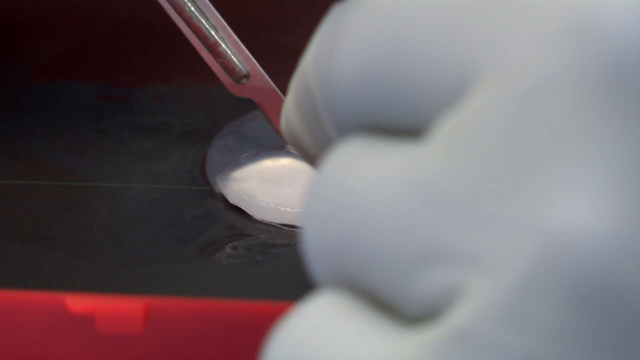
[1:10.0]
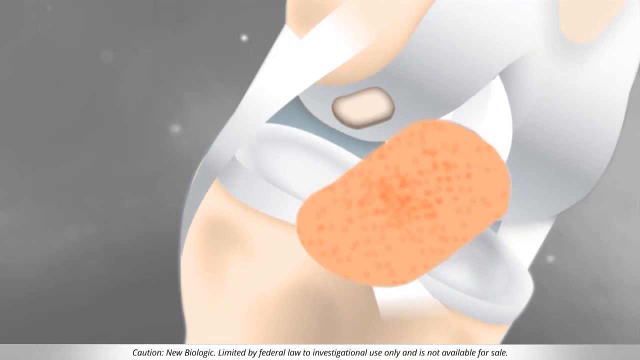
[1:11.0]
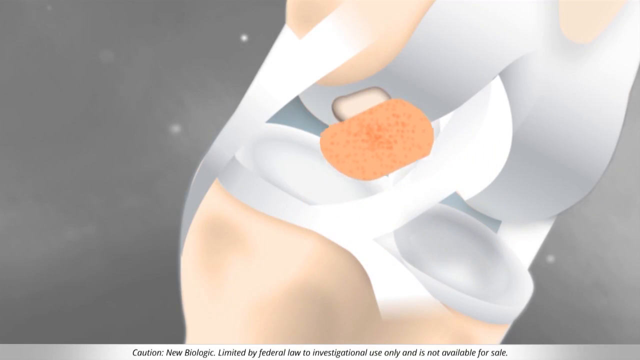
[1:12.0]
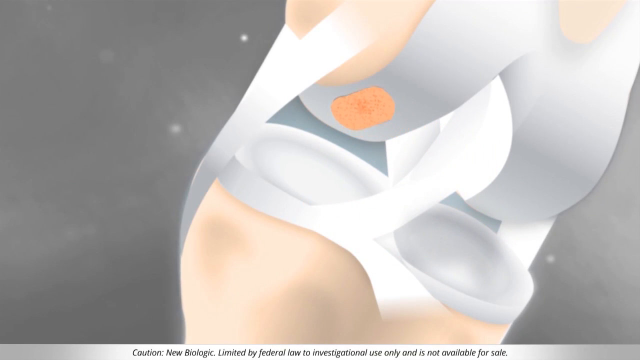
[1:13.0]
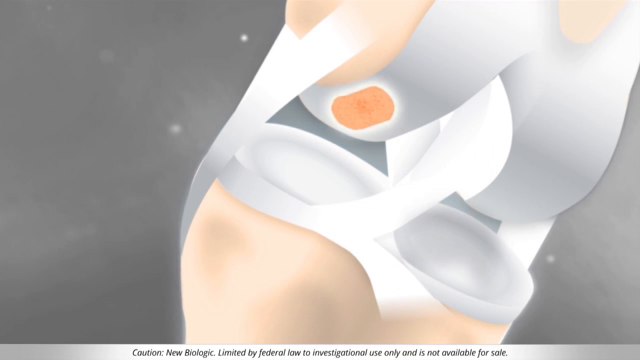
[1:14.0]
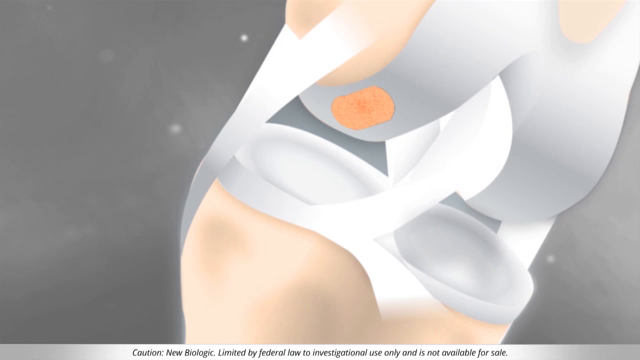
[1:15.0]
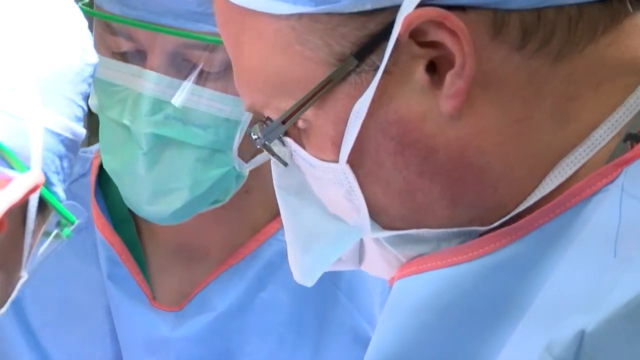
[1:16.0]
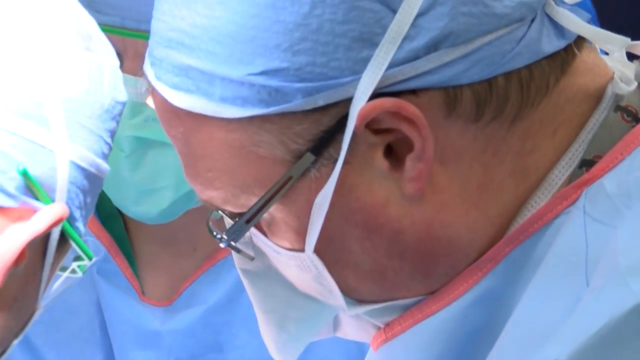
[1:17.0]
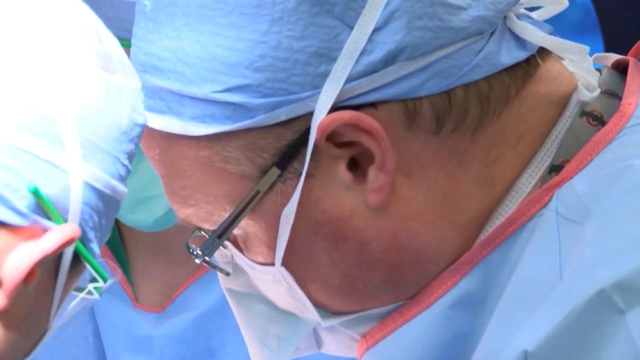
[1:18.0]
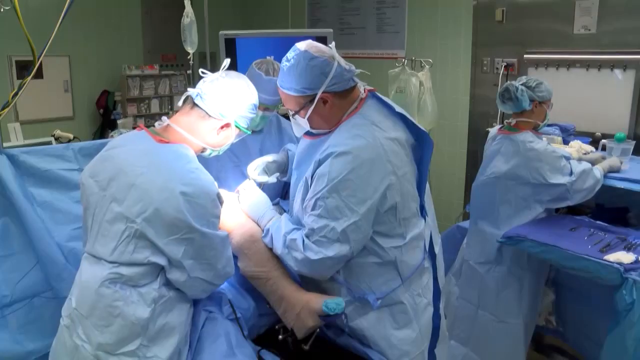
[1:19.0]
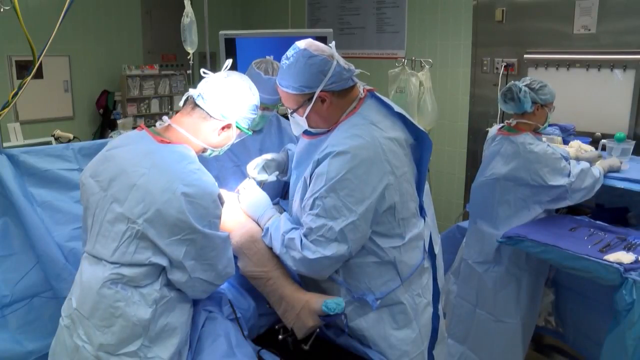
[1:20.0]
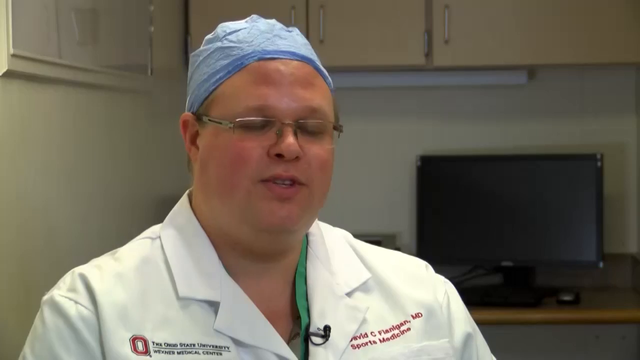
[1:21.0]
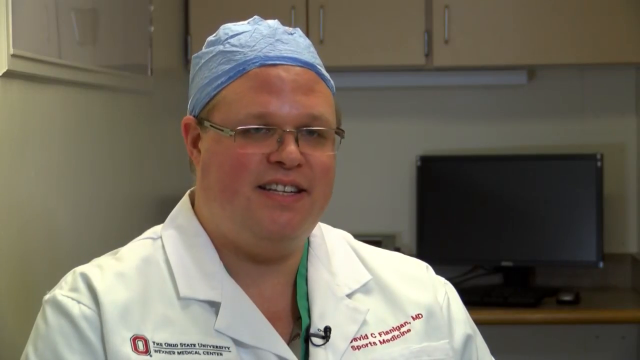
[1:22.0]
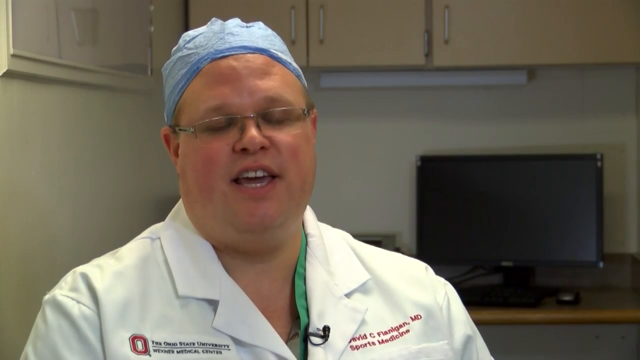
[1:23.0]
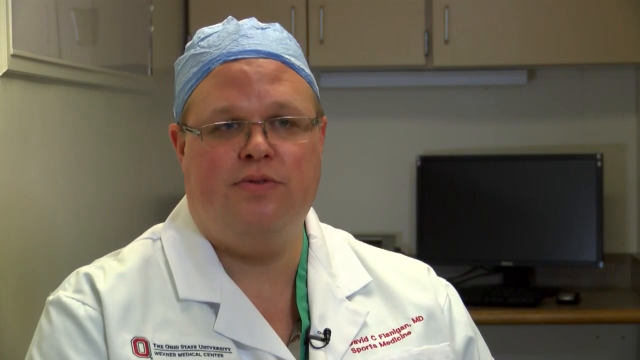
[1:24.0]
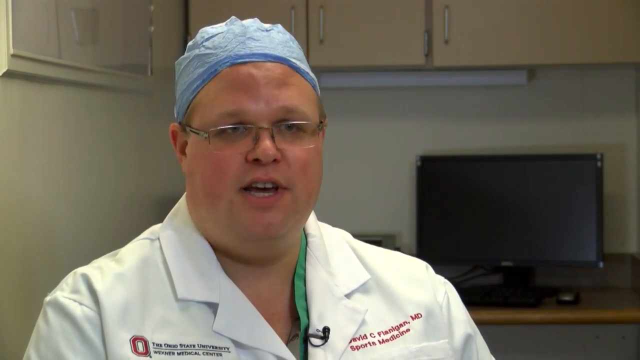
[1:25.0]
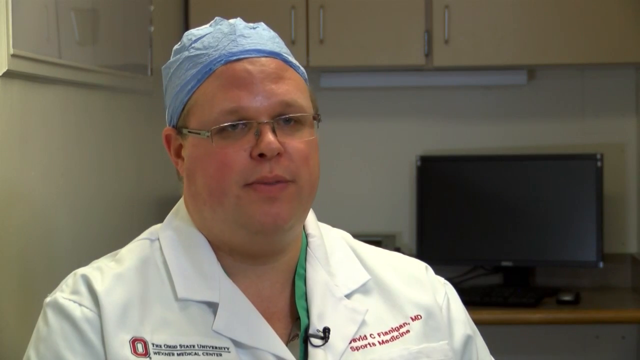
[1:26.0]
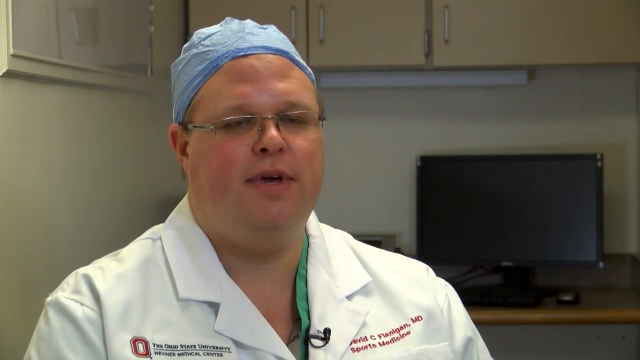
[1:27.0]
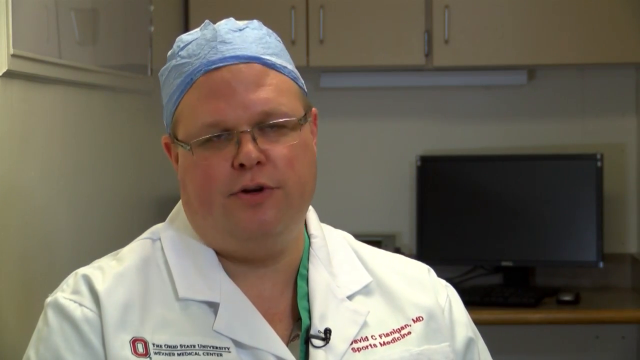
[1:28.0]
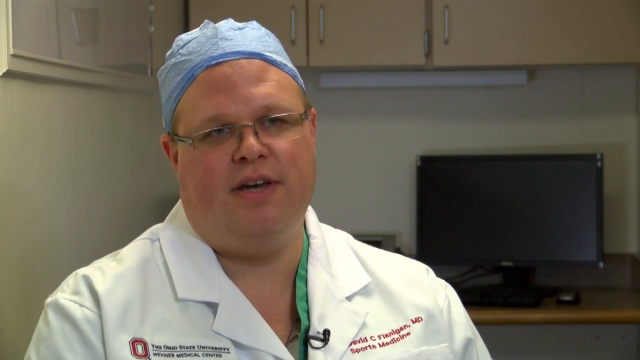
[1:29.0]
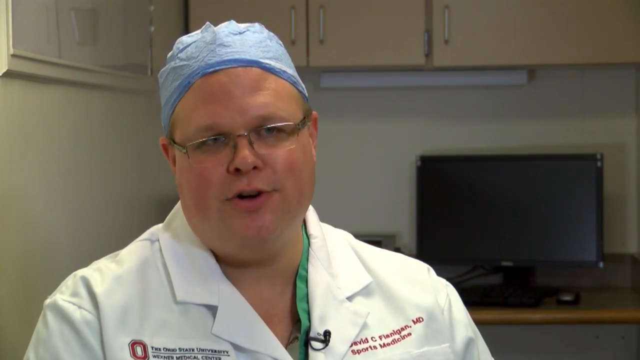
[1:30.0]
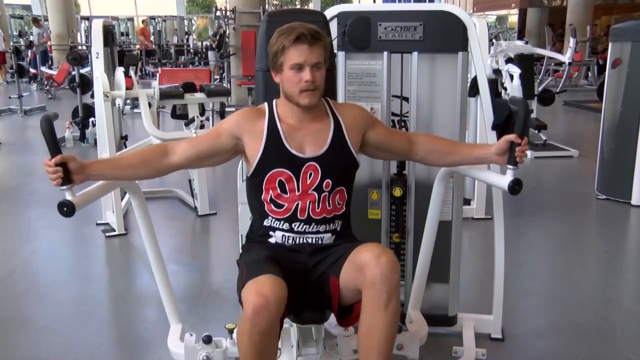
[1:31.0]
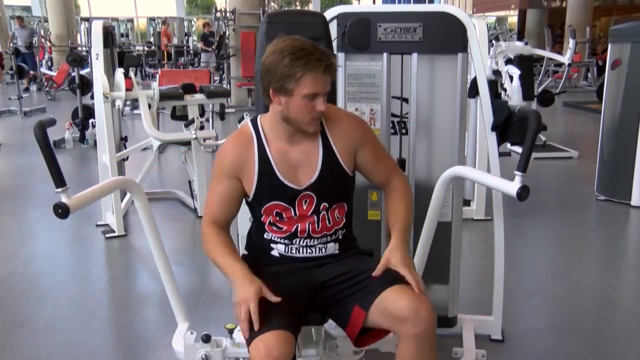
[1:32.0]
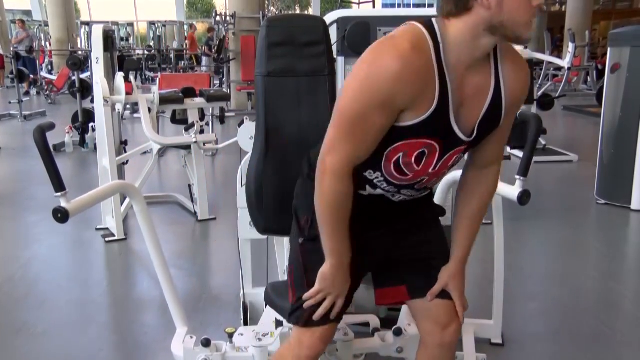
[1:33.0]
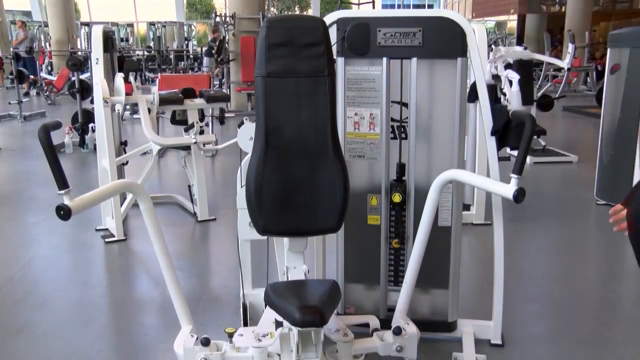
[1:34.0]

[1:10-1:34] A surgical blade is used to cut into the circle. The image changes to a graphic of a bone with damage on the ligament. An orange semi-circular cylinder shape flies onto the screen and fits exactly over the damage on the cartoon ligament. Next is a close-up of the surgeon doing surgery on the knee. A large blue screen hides the patient; the surgeon is in the middle of the image with the knee next to him, and he is turned so that he blocks the knee and no wounds are visible. The interviewed doctor returns, looking happier and more positive, smiling and nodding at the camera enthusiastically as the interview ends. The video ends on the man who was exercising standing up from the machine and walking away, turning to the right and walking off the right-hand side of the screen.